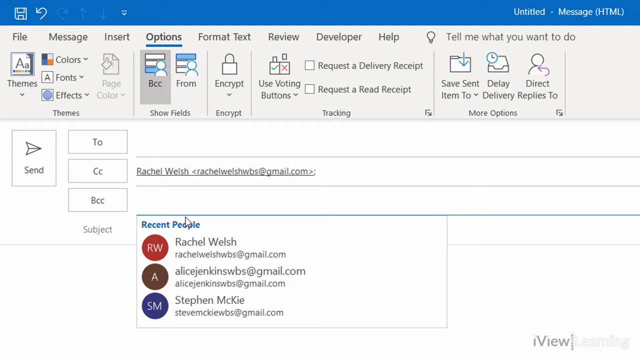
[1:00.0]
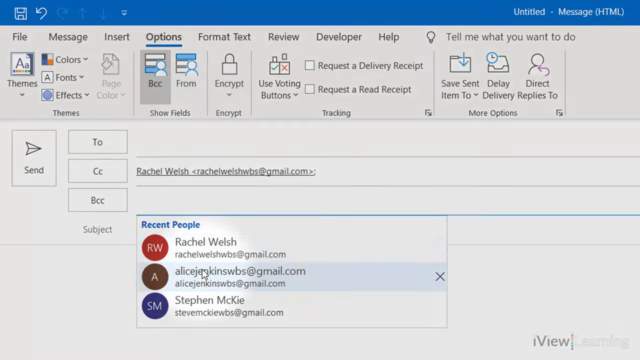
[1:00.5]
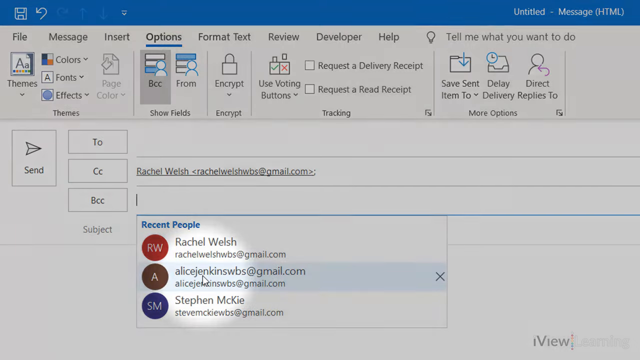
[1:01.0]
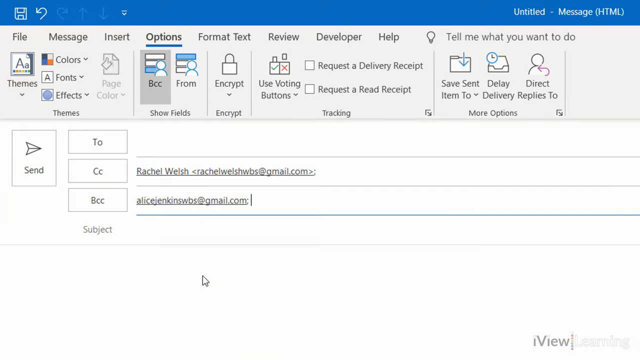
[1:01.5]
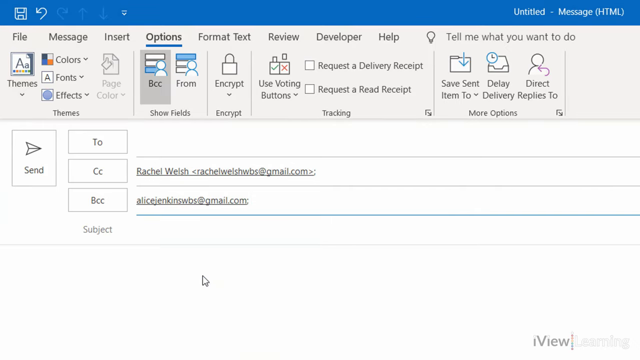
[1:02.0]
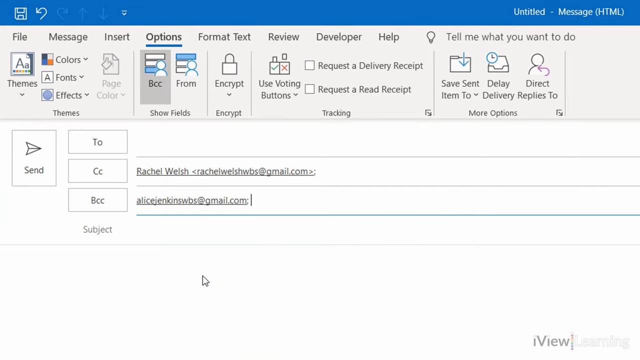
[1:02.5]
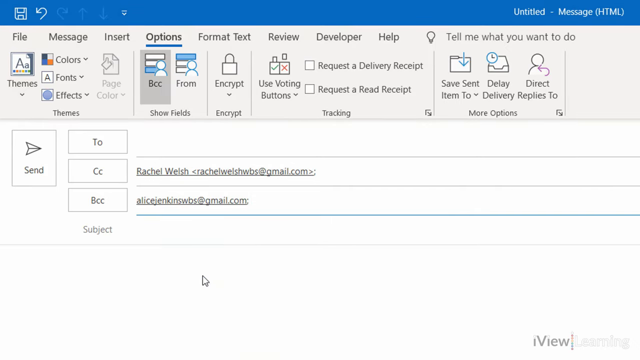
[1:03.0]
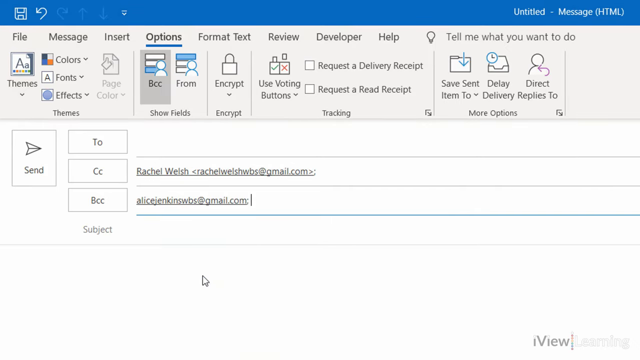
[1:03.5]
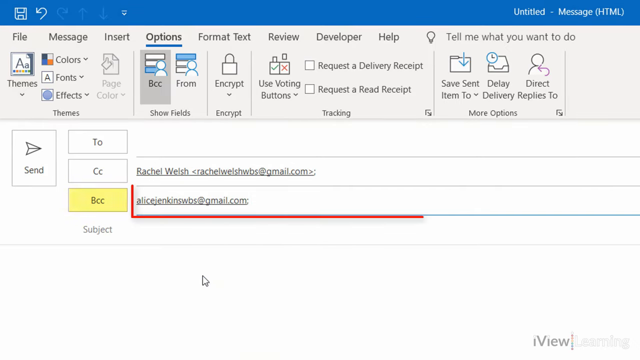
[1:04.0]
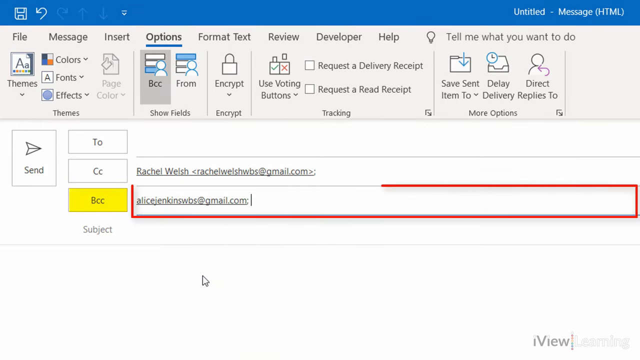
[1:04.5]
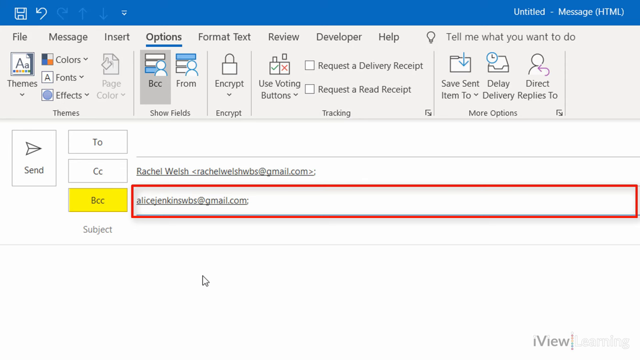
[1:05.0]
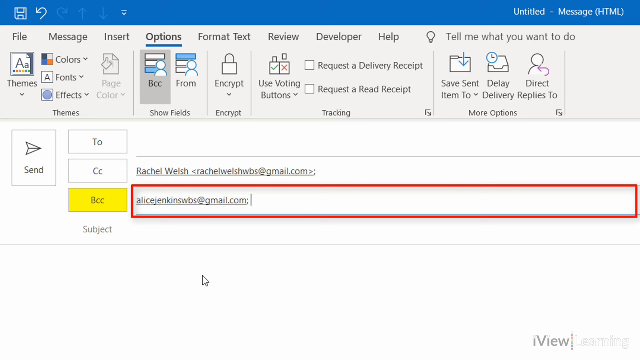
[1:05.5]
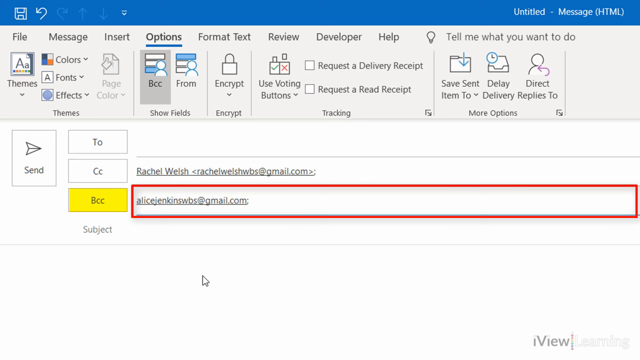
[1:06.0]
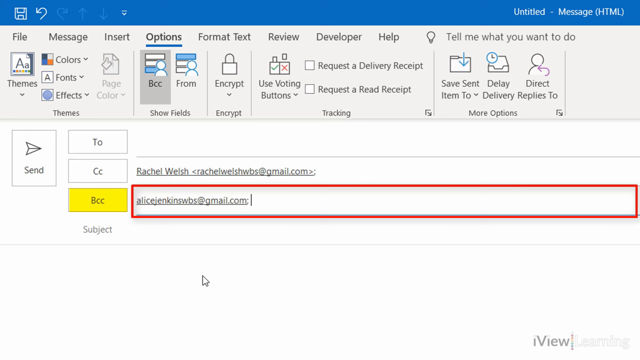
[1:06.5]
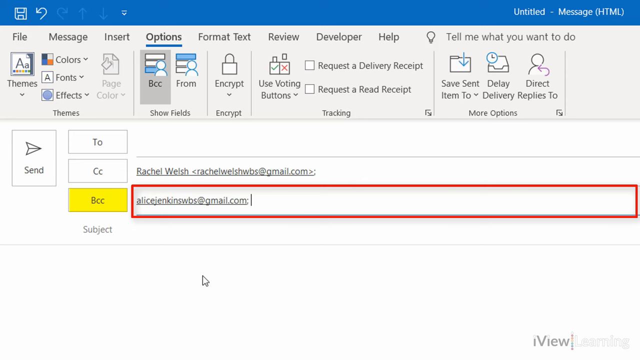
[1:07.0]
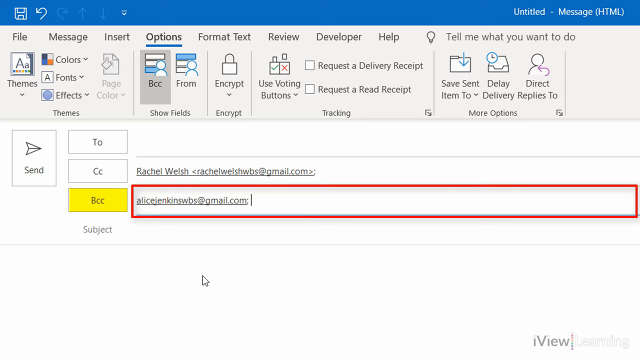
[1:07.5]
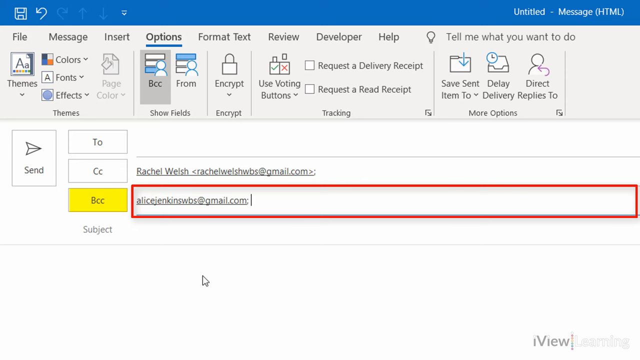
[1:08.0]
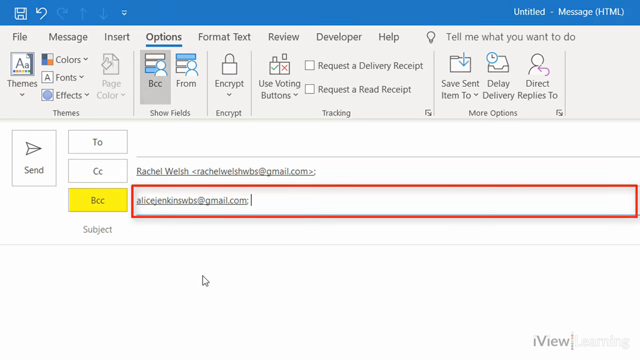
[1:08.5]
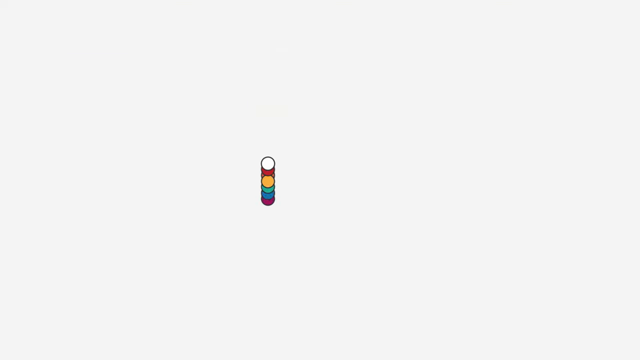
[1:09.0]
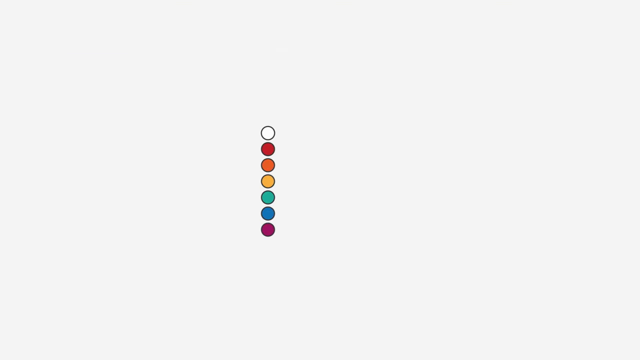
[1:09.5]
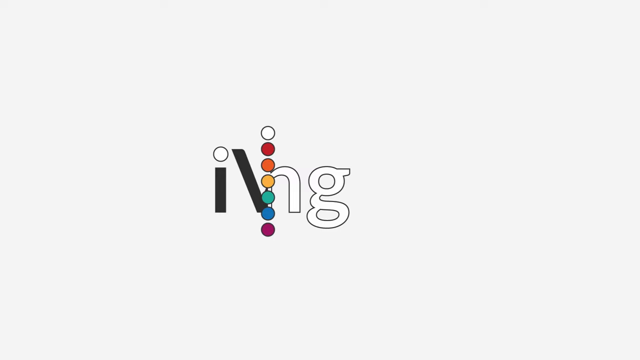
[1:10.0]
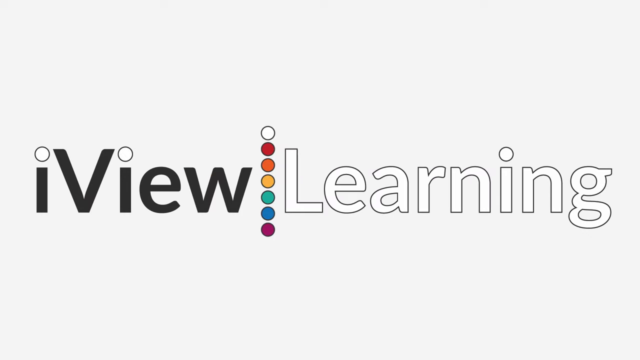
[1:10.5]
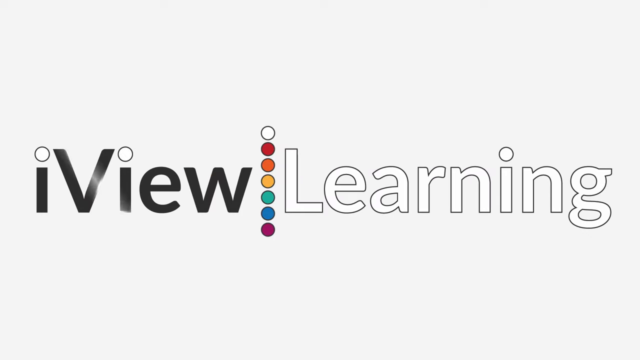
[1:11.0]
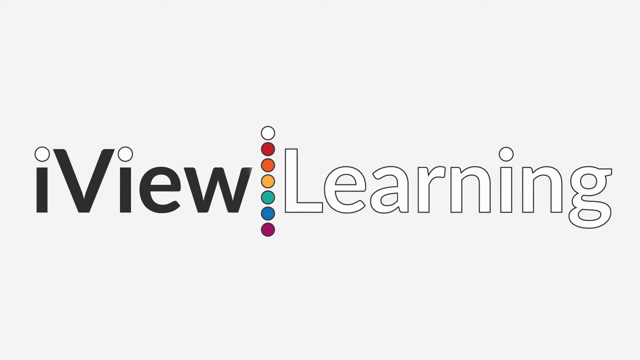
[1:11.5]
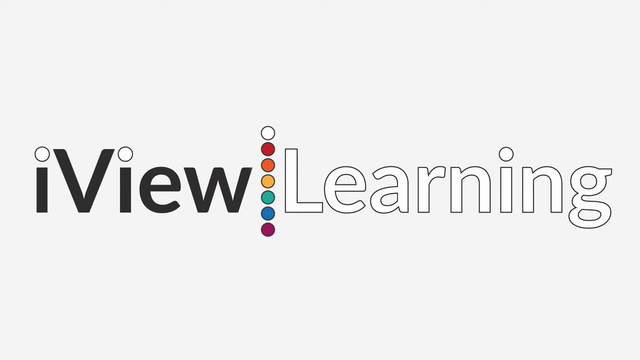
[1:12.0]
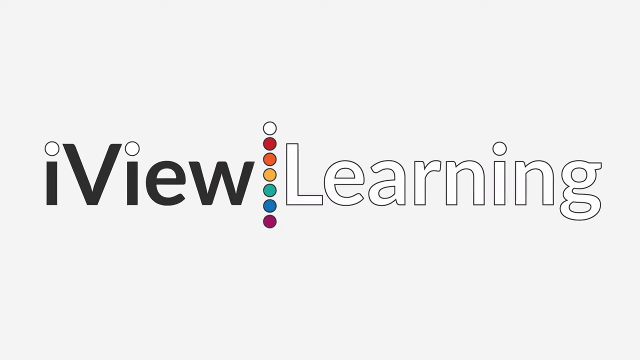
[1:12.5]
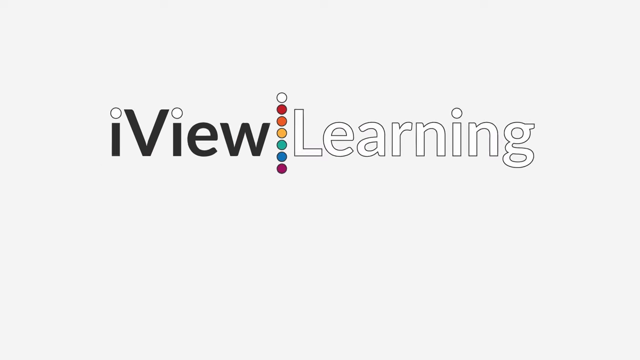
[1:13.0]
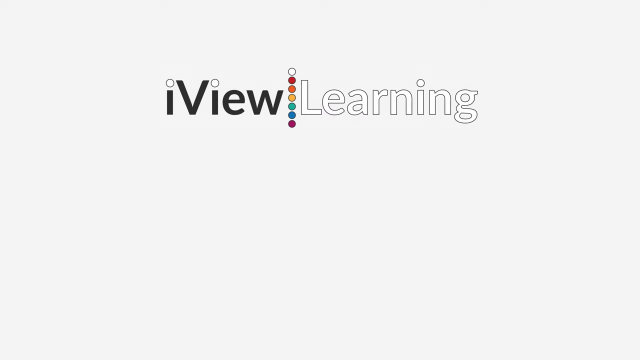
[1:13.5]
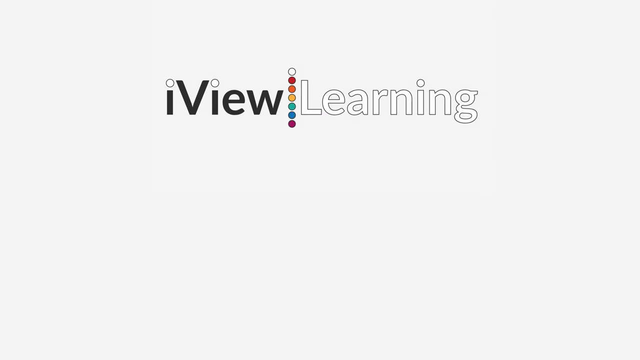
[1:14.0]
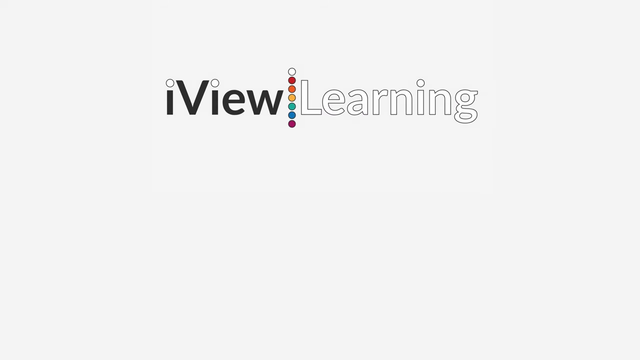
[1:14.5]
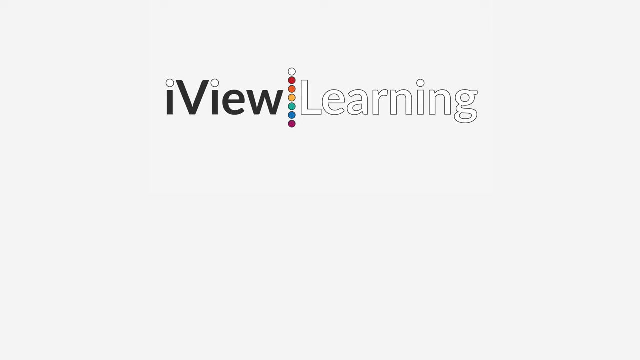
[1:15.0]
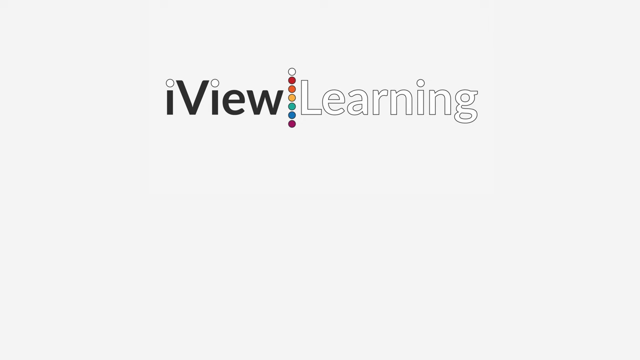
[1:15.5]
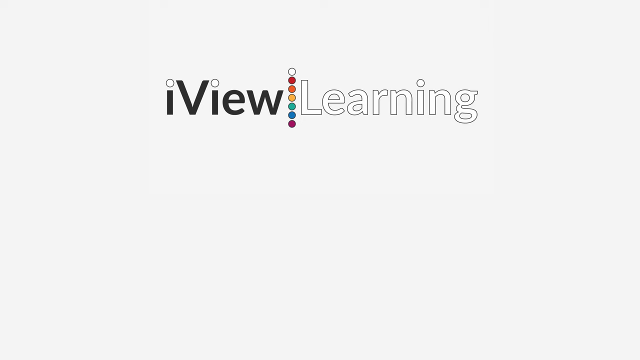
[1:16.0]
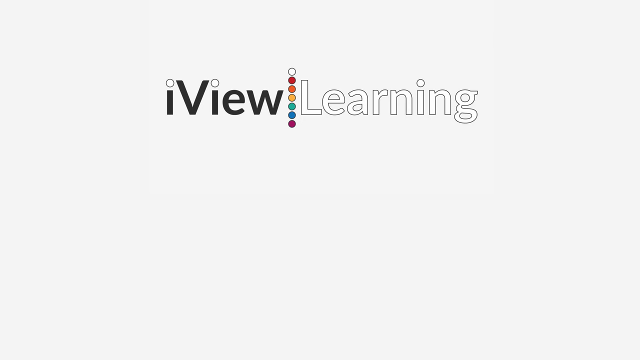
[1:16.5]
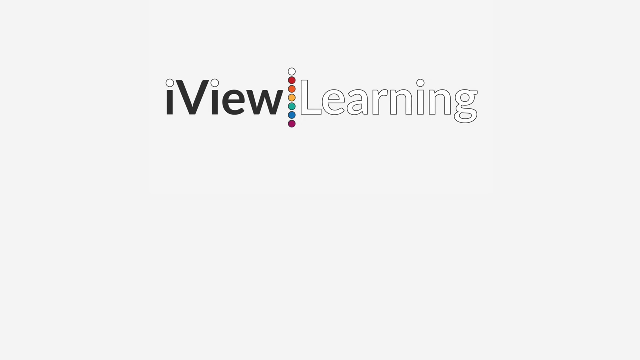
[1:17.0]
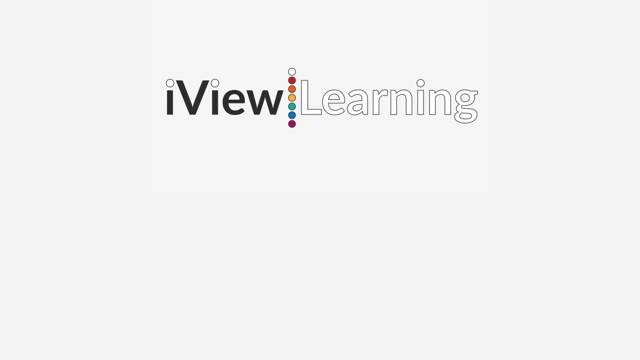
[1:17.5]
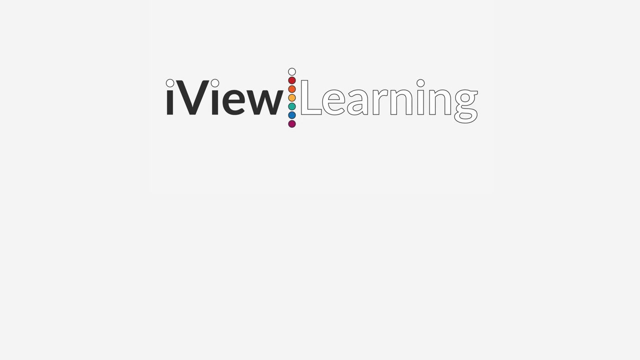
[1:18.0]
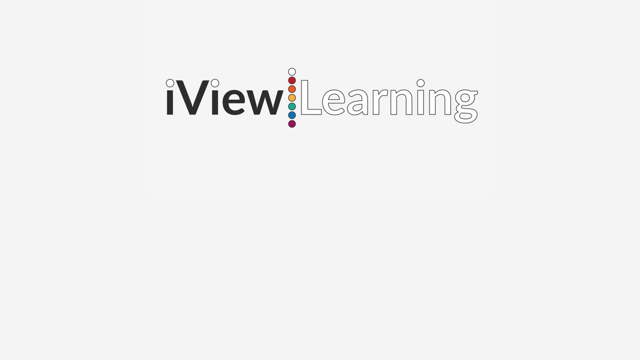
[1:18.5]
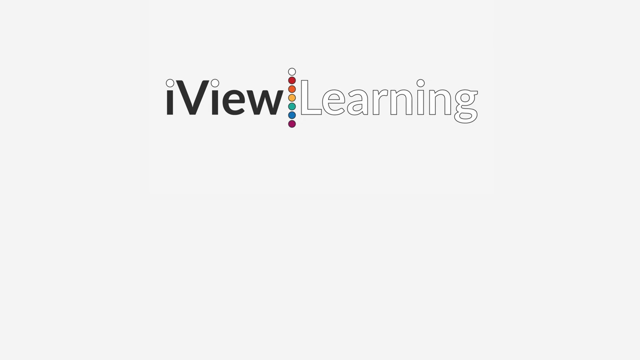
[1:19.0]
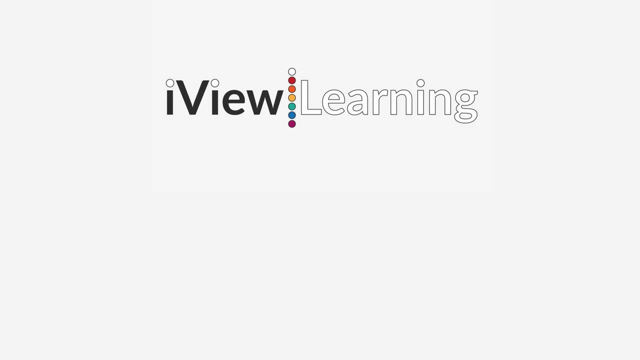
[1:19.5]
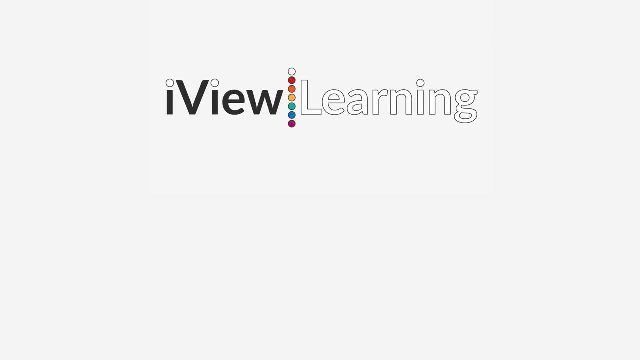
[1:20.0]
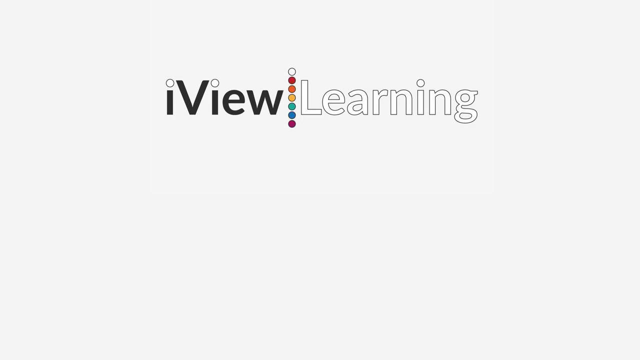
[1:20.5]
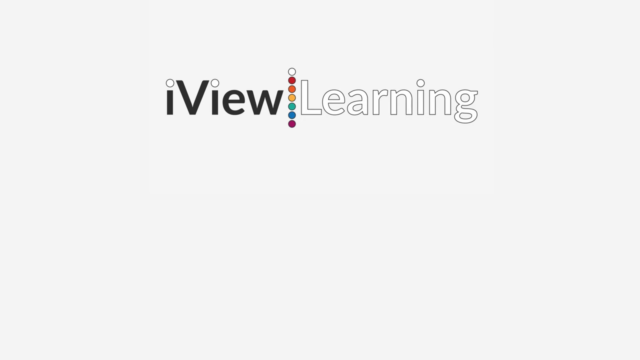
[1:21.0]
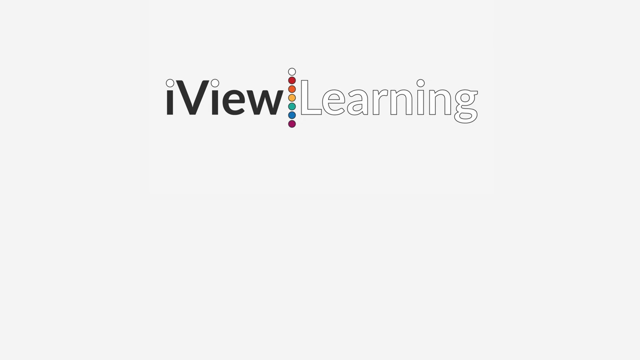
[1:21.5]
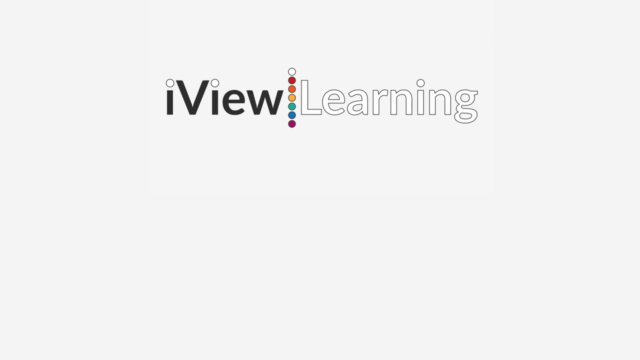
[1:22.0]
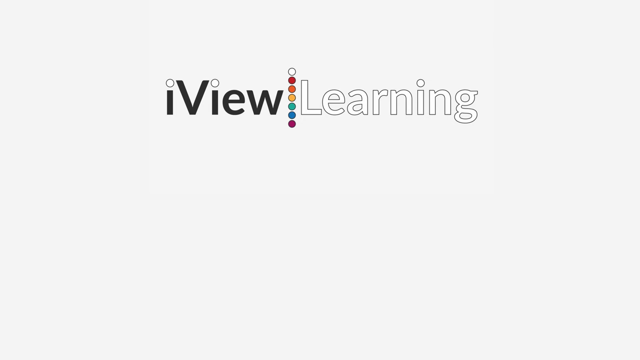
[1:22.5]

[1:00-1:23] When the mouse clicks on the search bar, the second suggested name is highlighted. The name is filled into the field, and email text populates the screen. A red rectangle and yellow highlight of the BCC field appear once again, and then the entire screen fades to white, once again showing the colorful circular iView Learning logo and its animation. The logo shrinks and moves to the top of the screen, a plain white background is shown, and the video ends. It appears to be a guide on how to use the CC and BCC functions in Microsoft Outlook, with steps shown along the way and animations indicating which buttons to press.